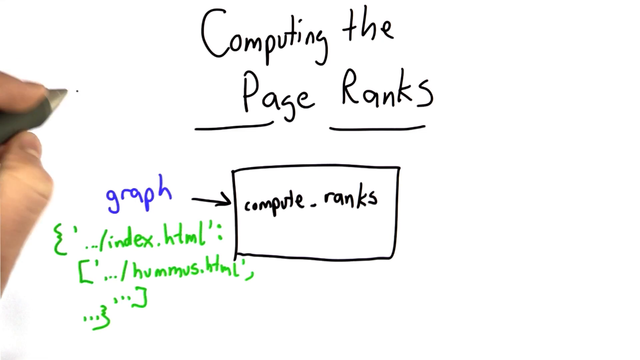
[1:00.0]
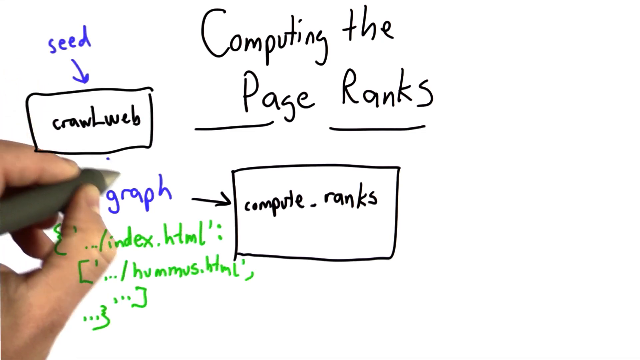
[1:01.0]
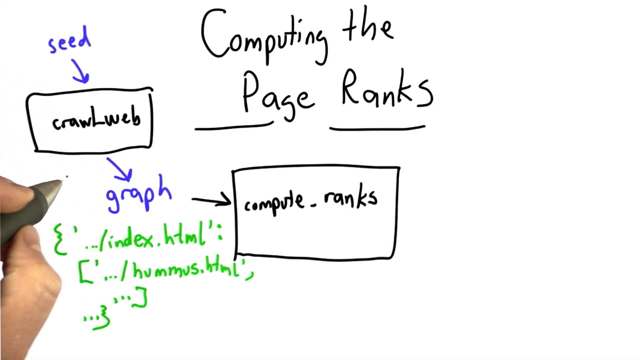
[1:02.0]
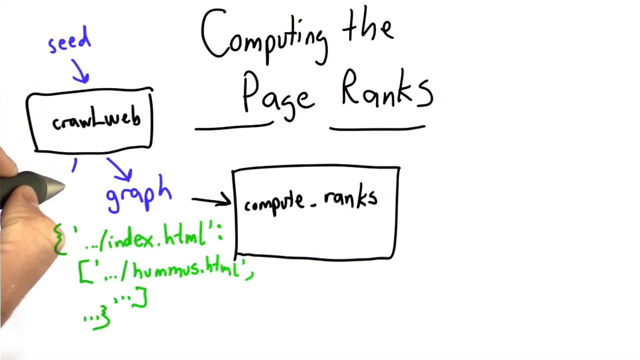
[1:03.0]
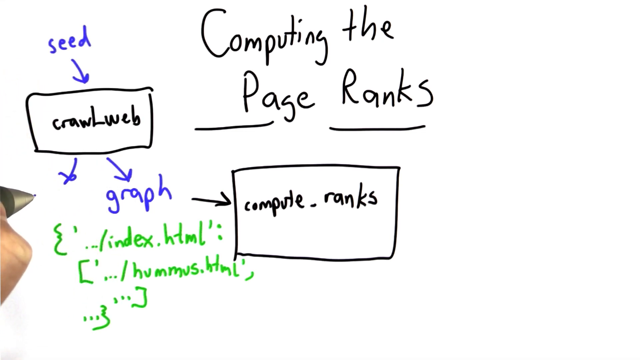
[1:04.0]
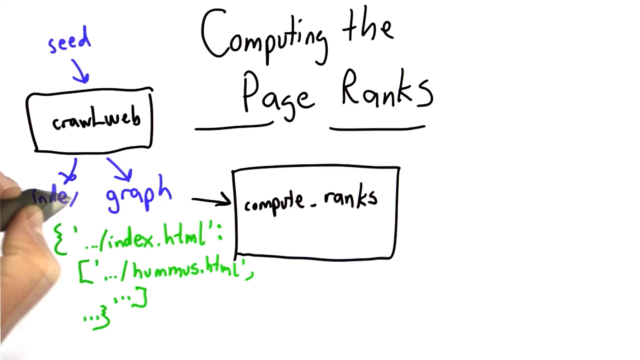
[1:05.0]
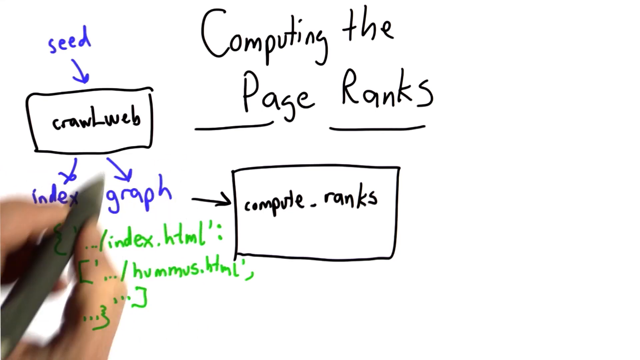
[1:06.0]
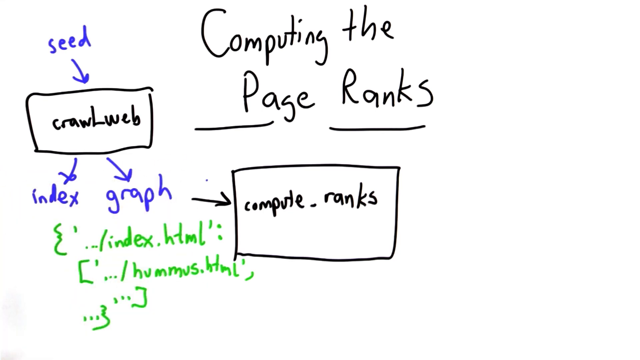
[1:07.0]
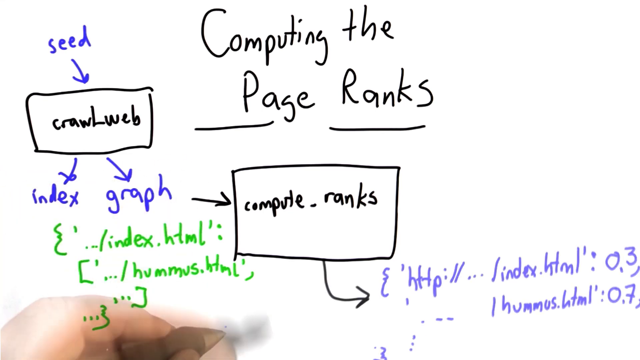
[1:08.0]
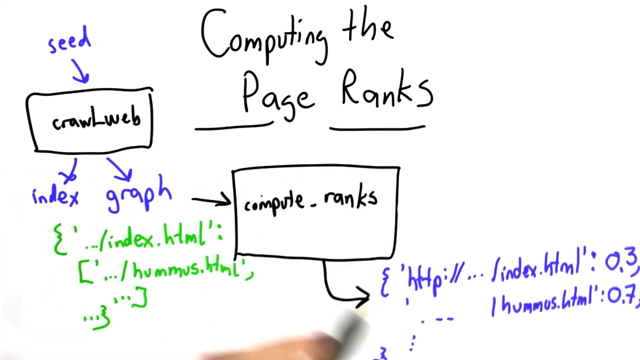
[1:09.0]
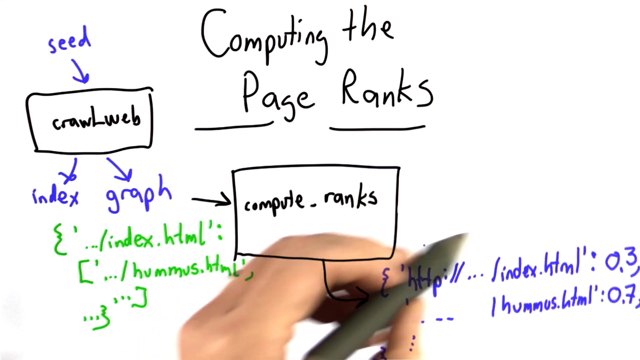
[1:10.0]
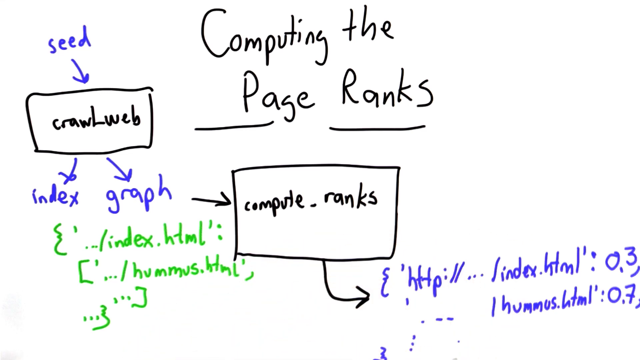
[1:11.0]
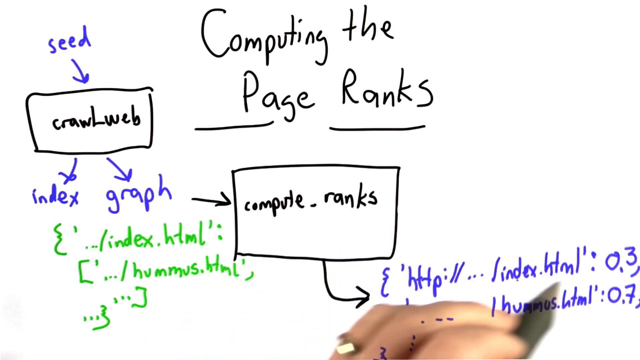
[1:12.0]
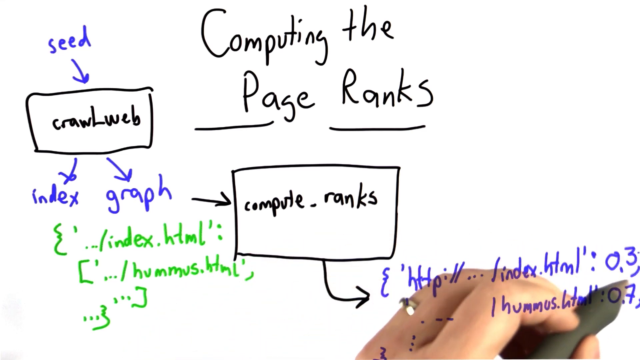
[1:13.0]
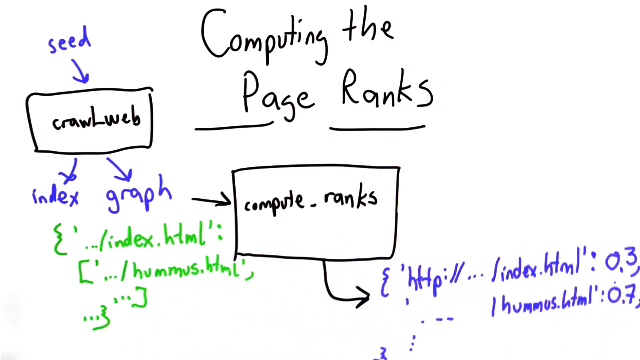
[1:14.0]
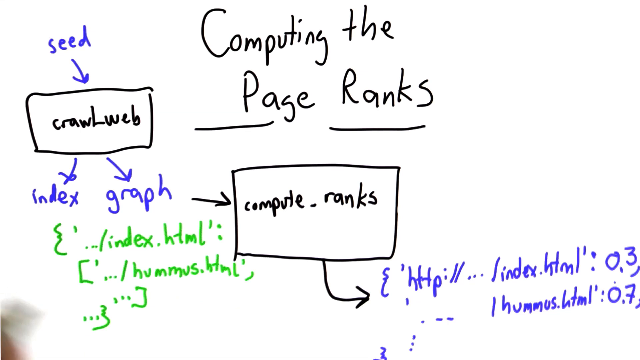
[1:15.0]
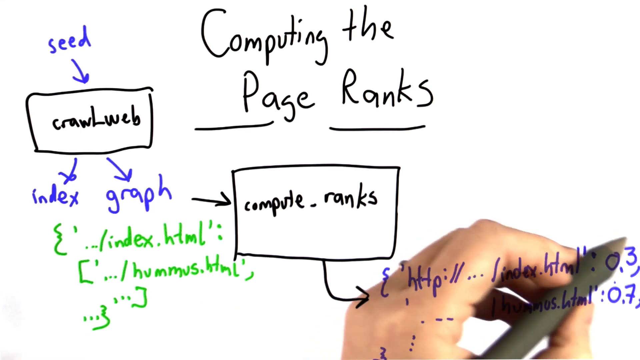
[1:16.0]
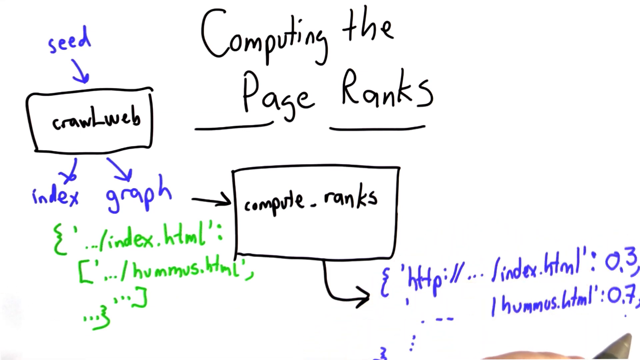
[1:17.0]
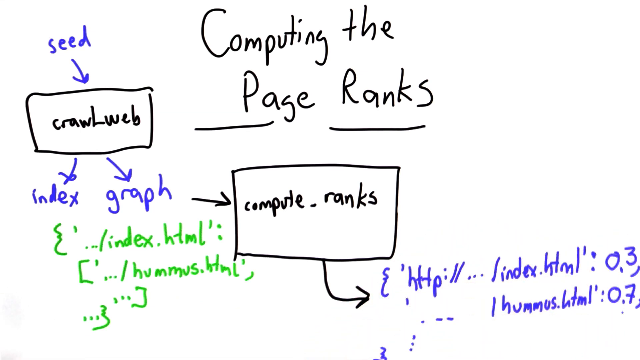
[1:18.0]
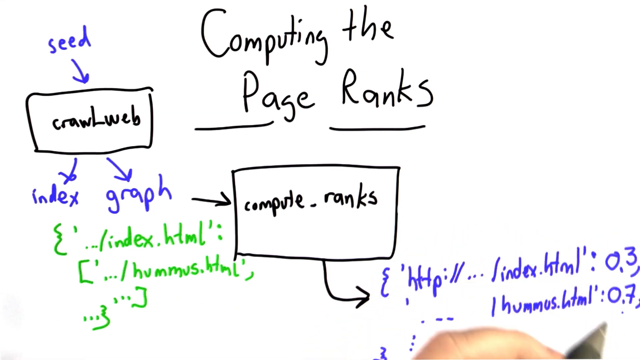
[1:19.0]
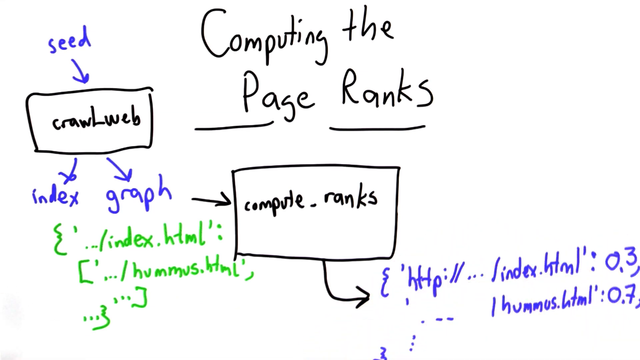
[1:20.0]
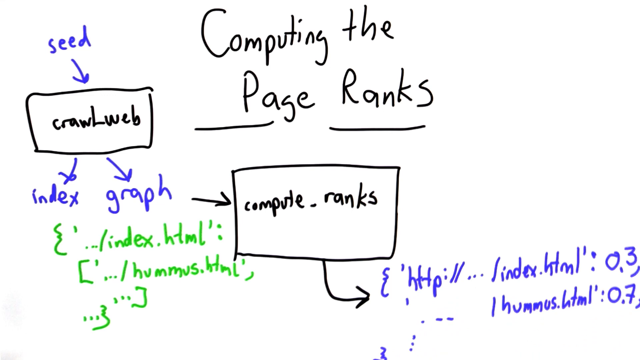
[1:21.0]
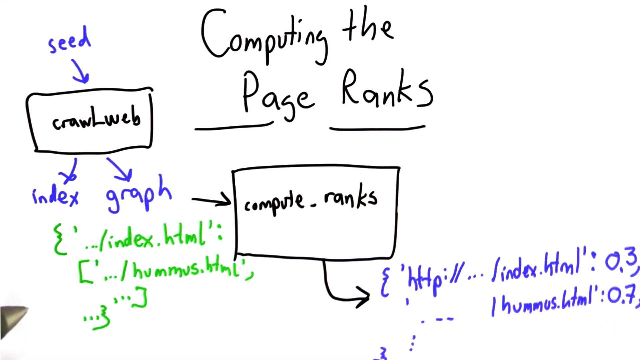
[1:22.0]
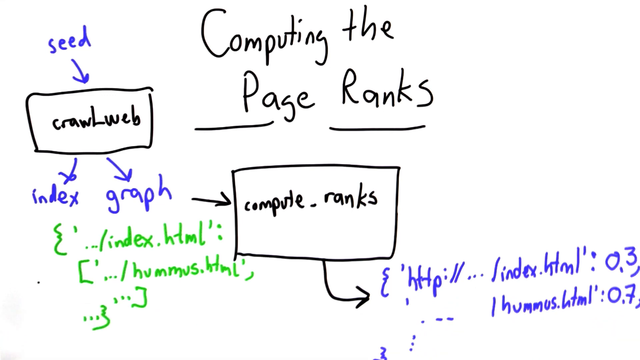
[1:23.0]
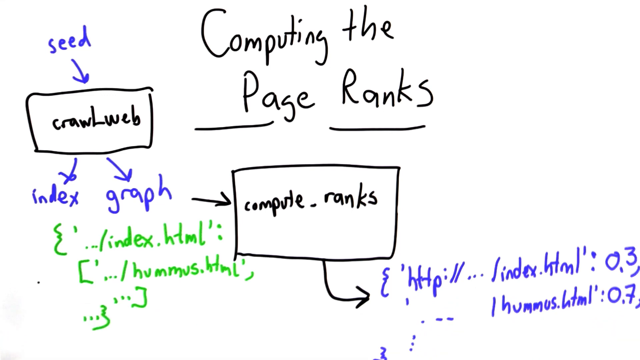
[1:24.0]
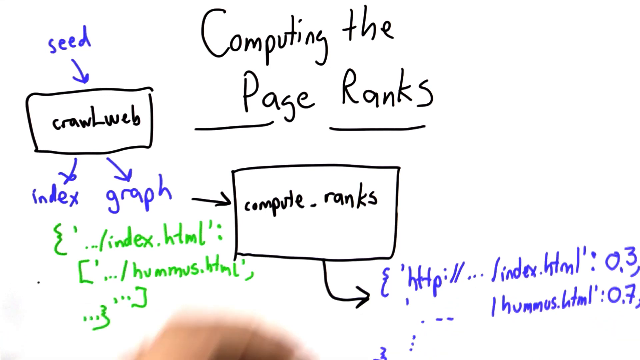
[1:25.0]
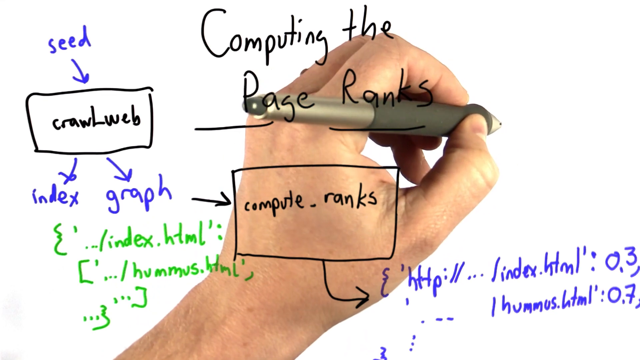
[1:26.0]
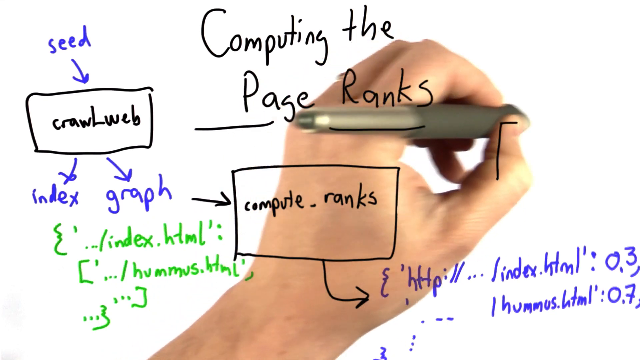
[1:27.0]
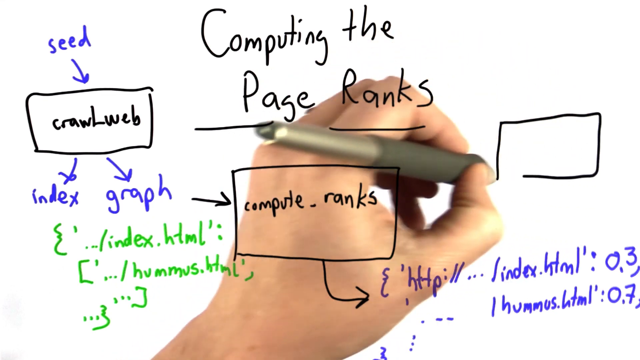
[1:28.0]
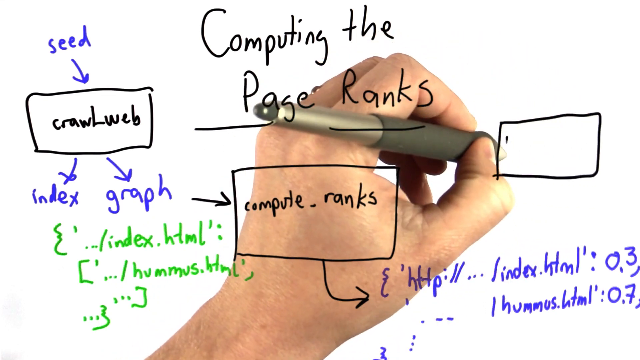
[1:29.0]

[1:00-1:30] The drawing continues. Along with the Compute Ranks square, a new square appears in the upper left corner with "crawlweb" written above the word "seed," and an arrow points down from them to "index," which is directed to "graph," and the graph to Compute Ranks, showing an order of operations that begins with the seed. Just below the index and the graph, code is drawn in green between brackets and parentheses. On the right, another piece of code is written in blue. One more graphic is drawn on the right.